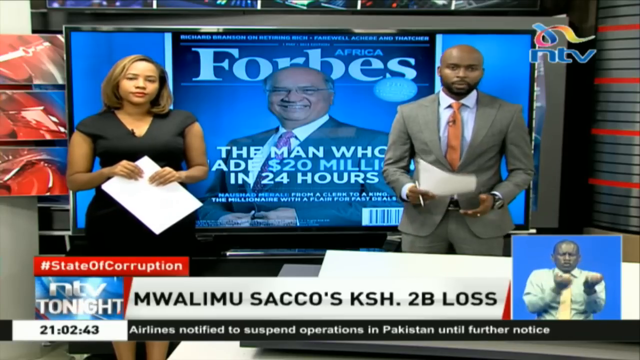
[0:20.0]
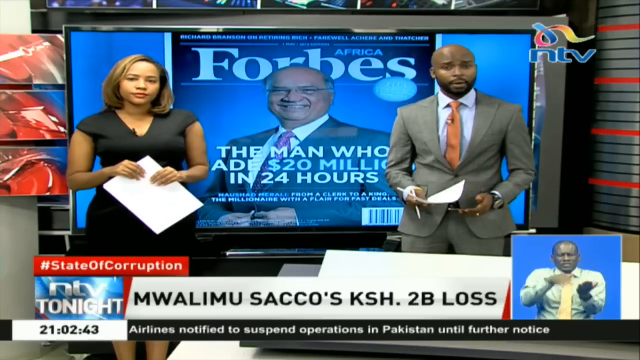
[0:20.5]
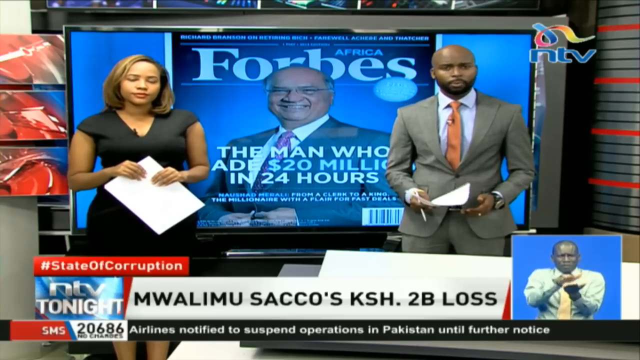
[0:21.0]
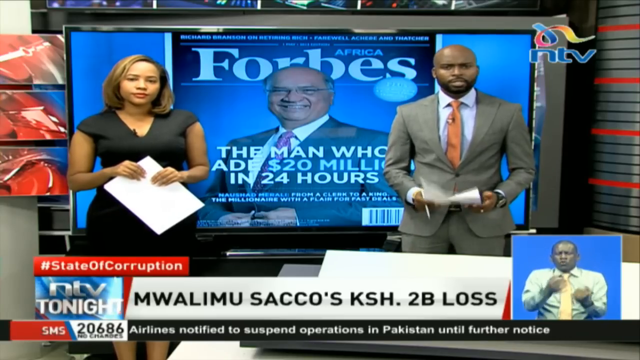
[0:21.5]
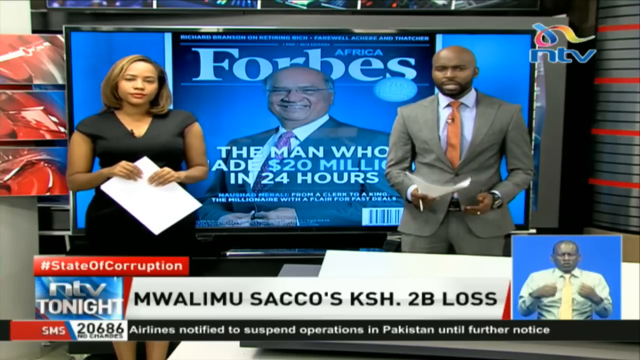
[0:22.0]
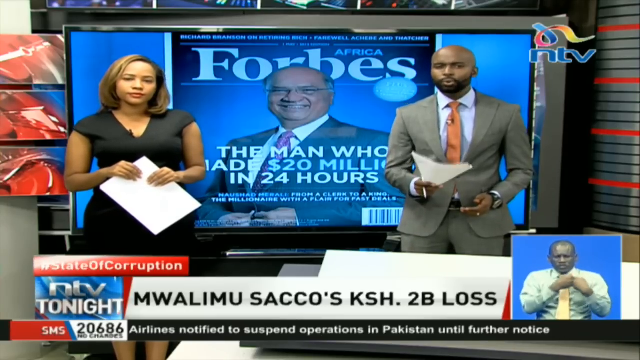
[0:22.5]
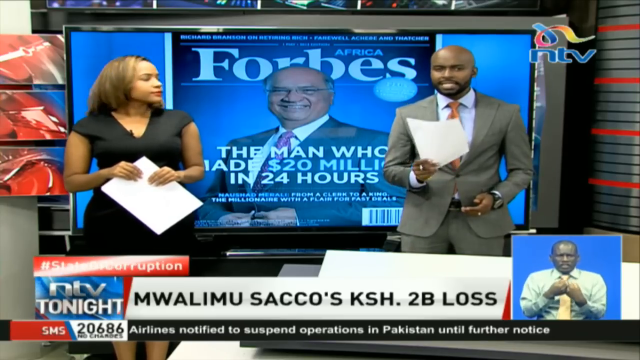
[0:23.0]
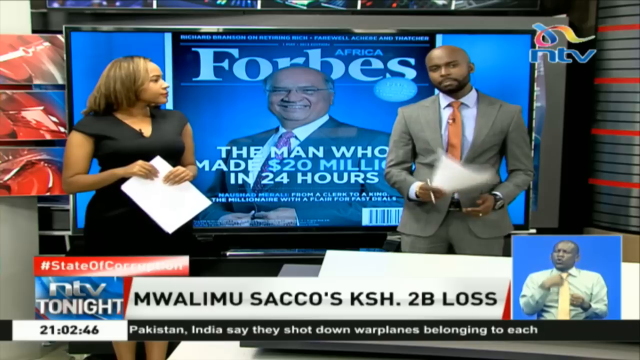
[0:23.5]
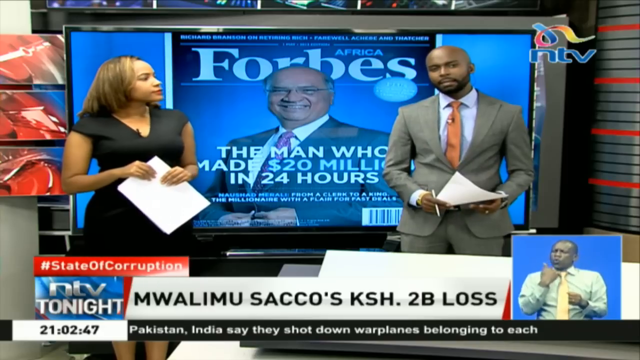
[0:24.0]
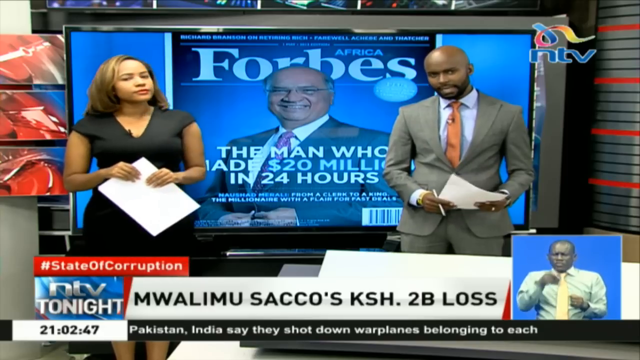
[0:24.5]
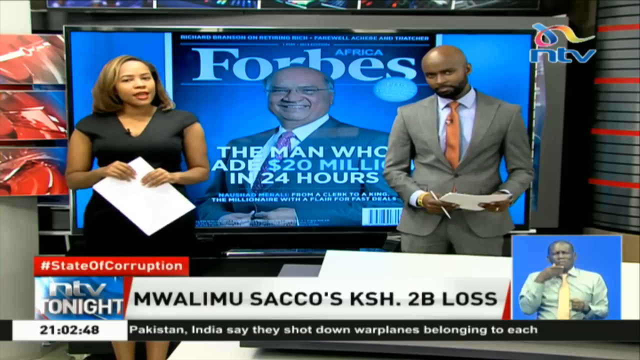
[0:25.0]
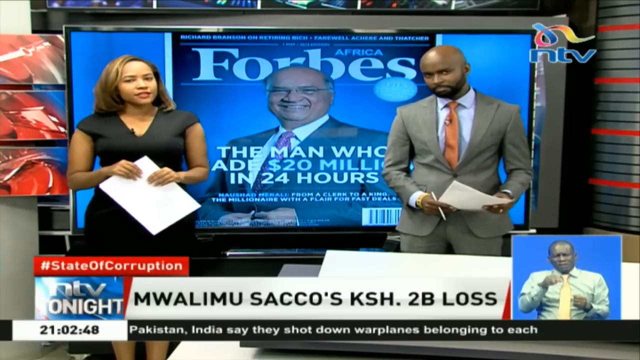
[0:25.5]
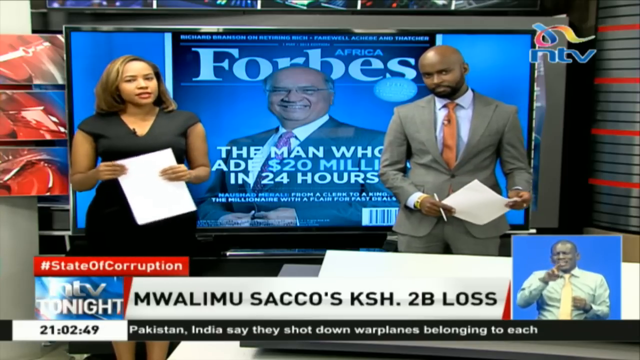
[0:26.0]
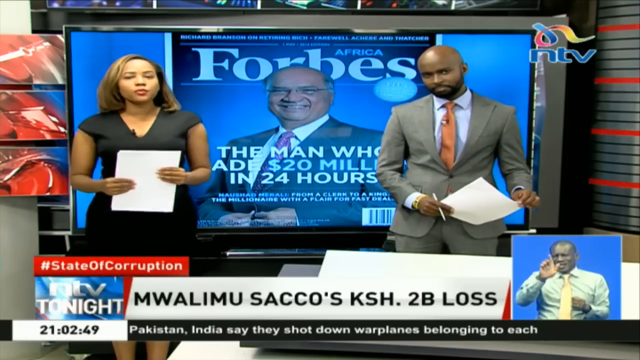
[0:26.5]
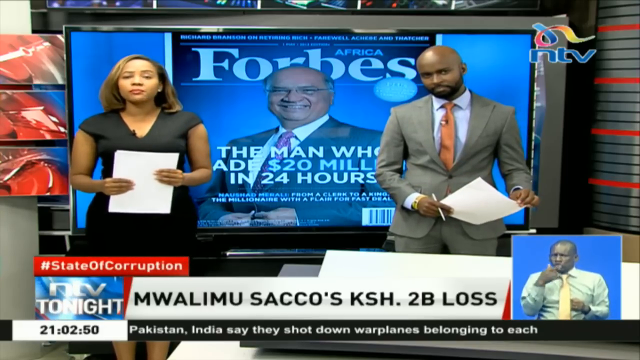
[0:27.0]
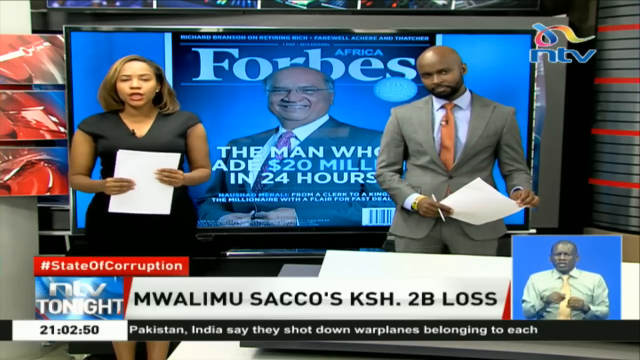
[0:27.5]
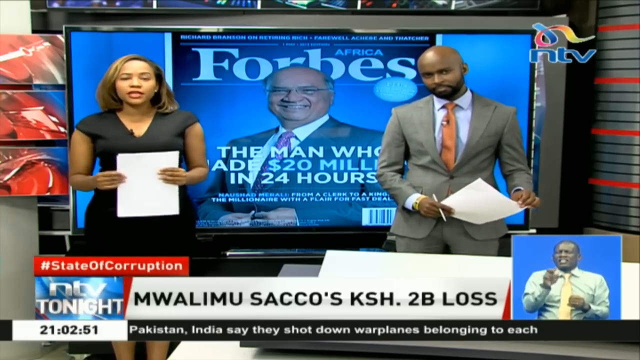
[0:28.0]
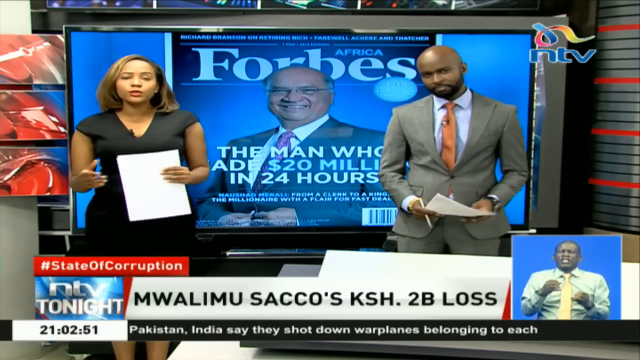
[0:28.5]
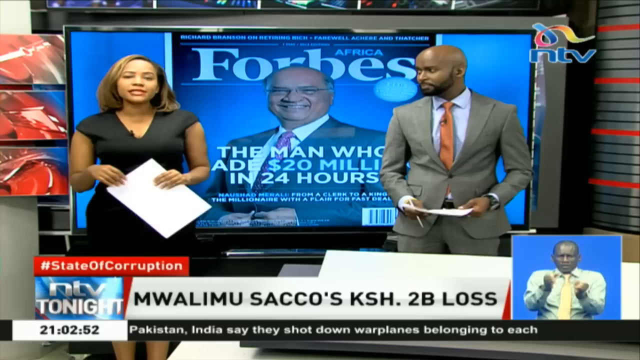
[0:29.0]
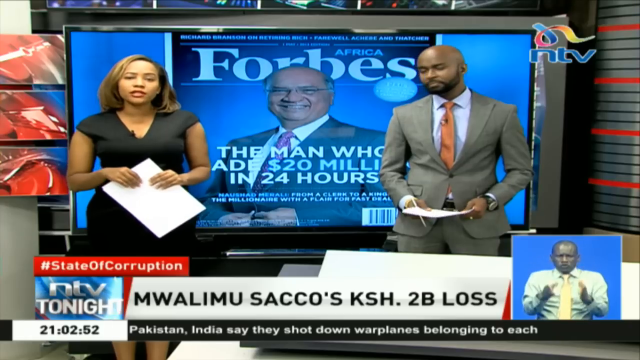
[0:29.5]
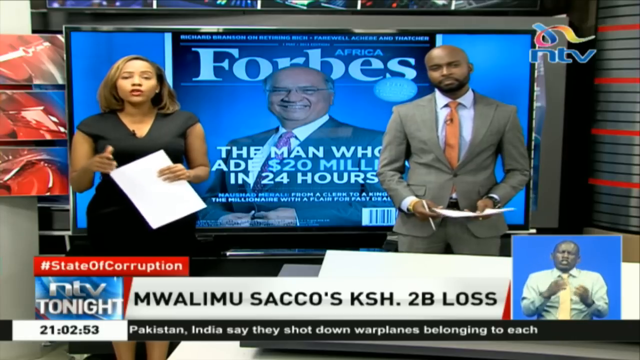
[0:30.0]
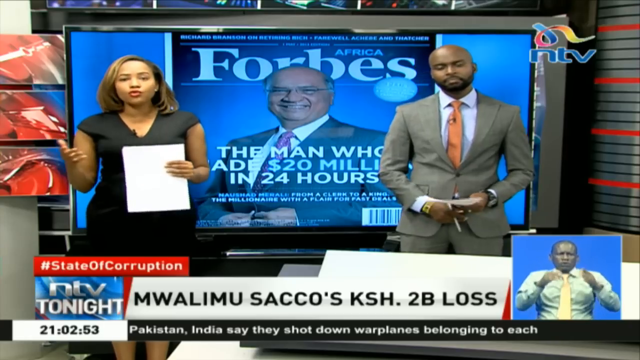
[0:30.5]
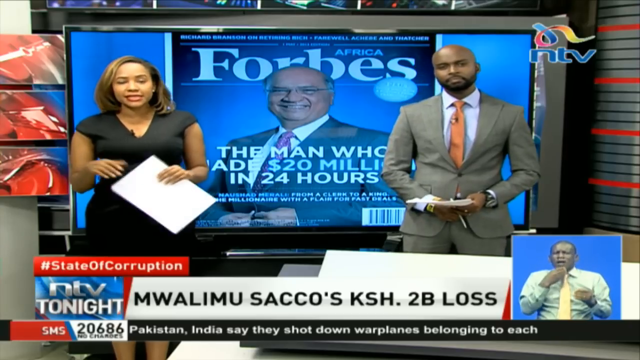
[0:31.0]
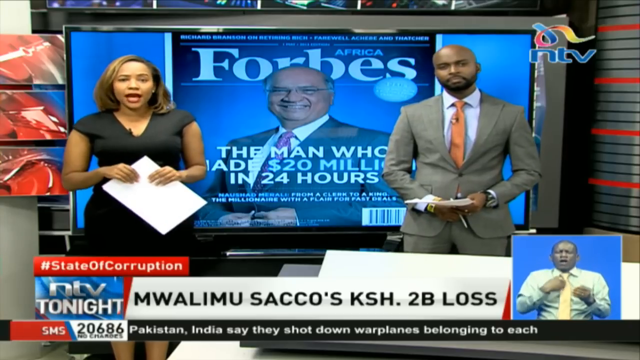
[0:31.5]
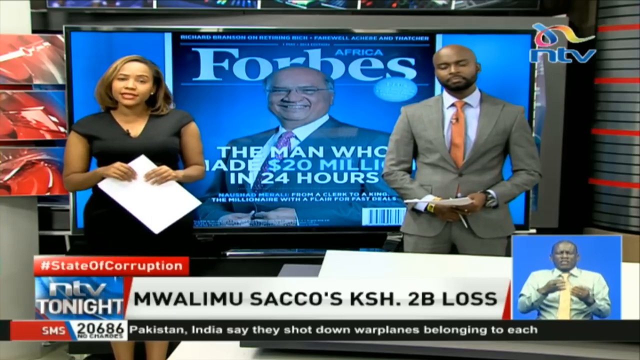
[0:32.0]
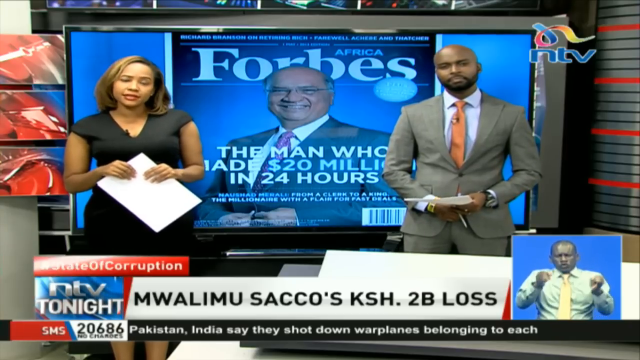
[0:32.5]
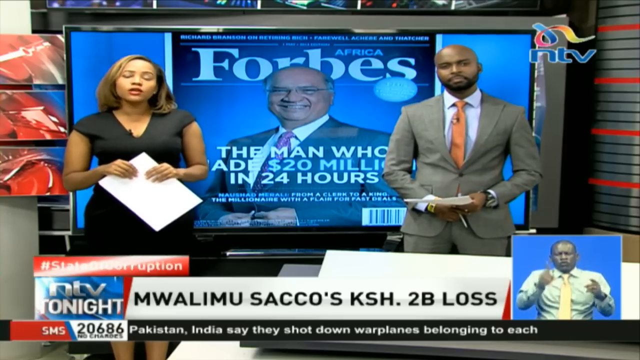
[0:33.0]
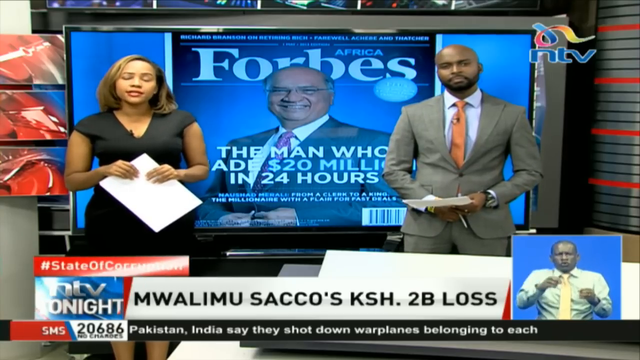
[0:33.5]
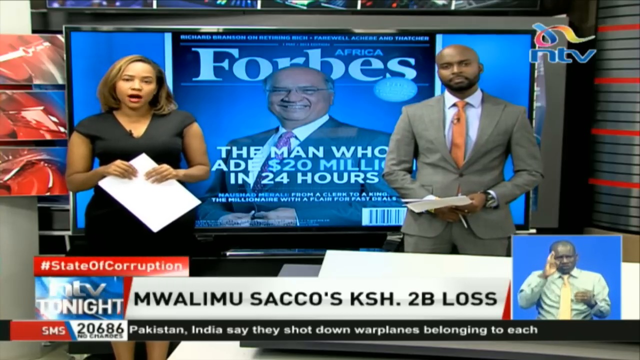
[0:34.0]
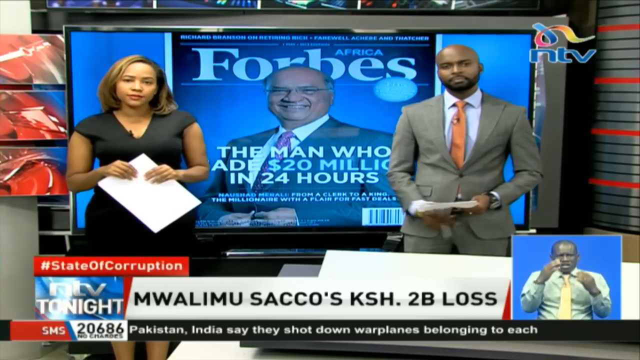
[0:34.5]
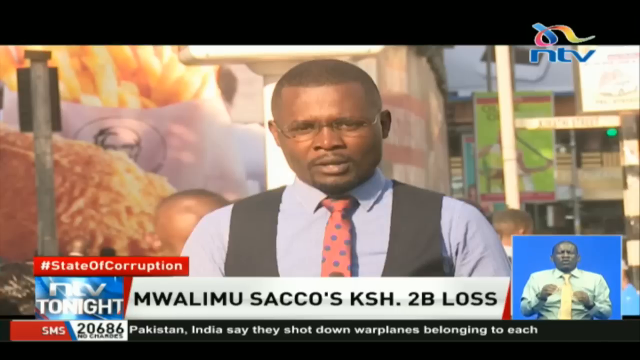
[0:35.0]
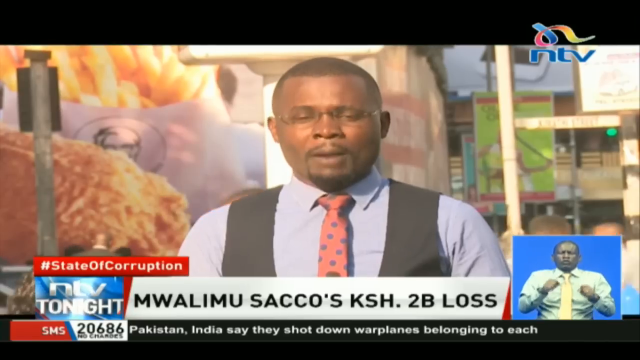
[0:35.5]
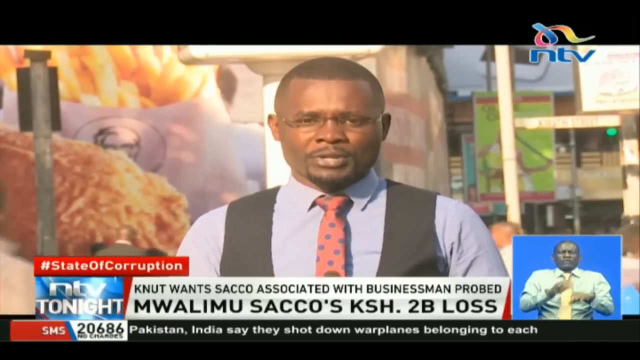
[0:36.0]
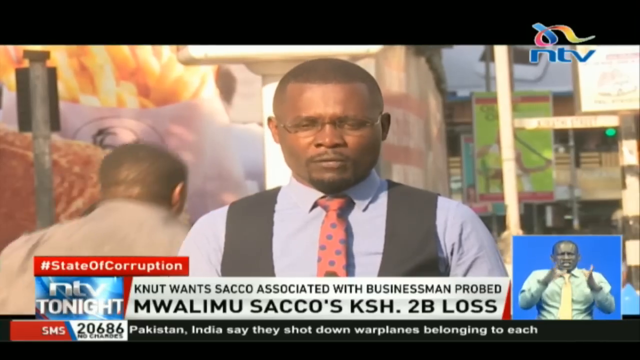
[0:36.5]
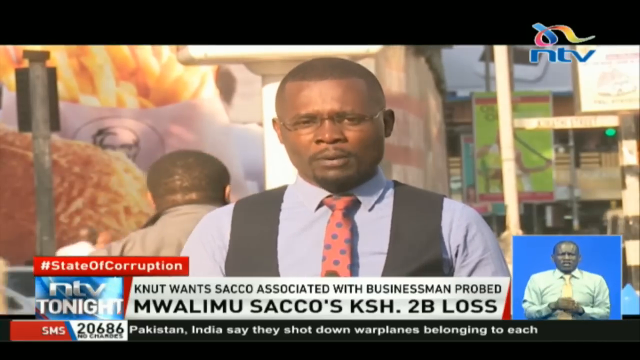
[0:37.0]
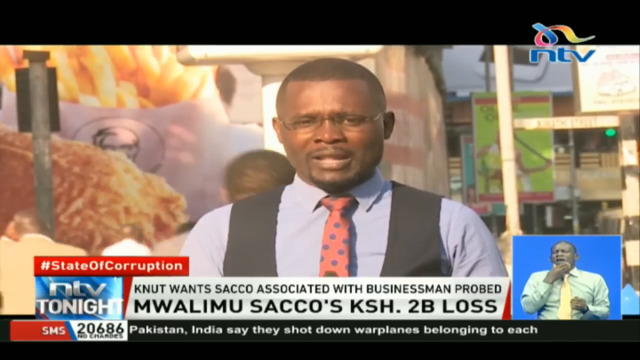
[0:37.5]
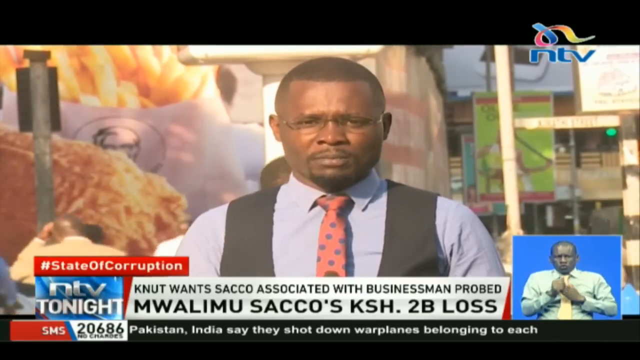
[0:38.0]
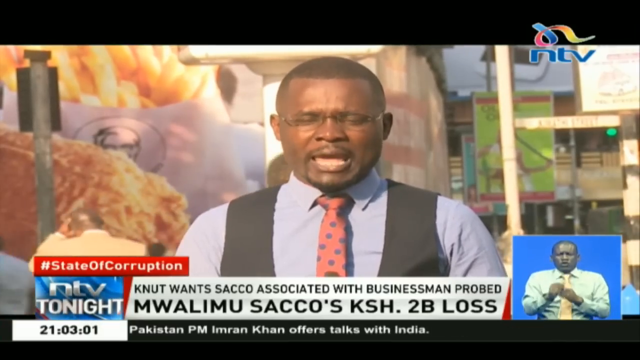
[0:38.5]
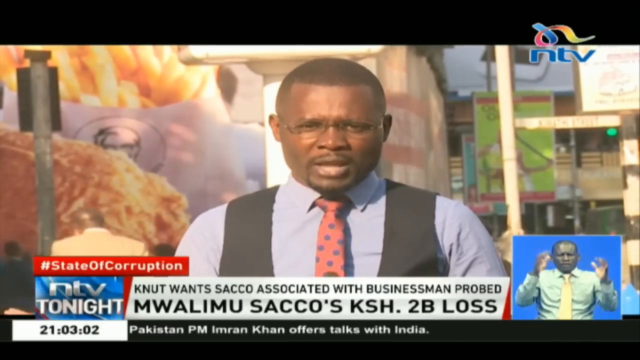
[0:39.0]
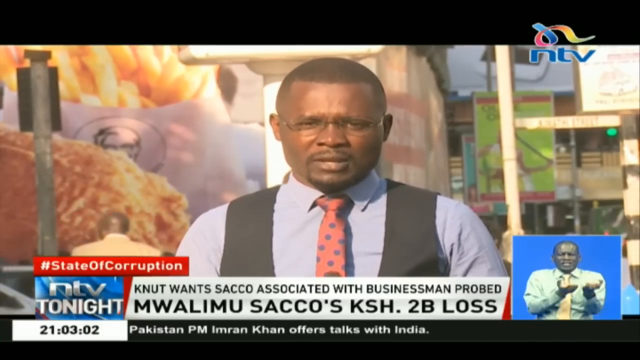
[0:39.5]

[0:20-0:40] On NTV, the blue NTV emblem is in the upper right corner of the screen with a curling multi-coloured ribbon above it. The news correspondents remain on screen: on the left is a woman with lighter skin, African-American, with medium-length hair, wearing a sleeveless black dress; on the right is another African man with lighter skin, dark eyes, a mustache and a beard, wearing a tan suit, a white shirt and an orange tie. Beneath them is "State of Corruption", then "NTV Tonight". The headline reads "MWALIMU SACCS KSH two billion loss". To the right of it, a middle-aged African man in a white shirt and yellow tie does sign language for the hearing-impaired. Below, another headline reads "Airlines notified to suspend operations in Pakistan until further notice".